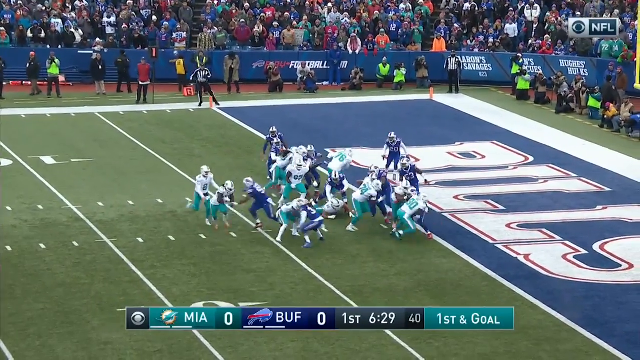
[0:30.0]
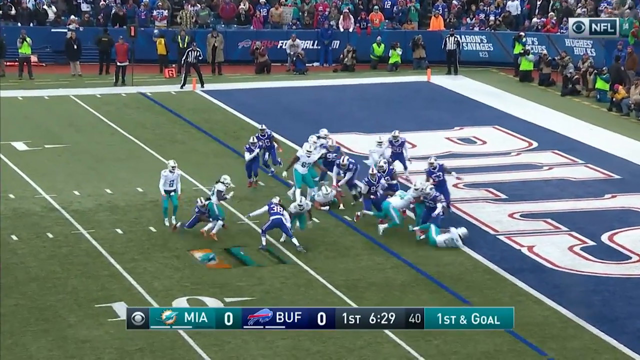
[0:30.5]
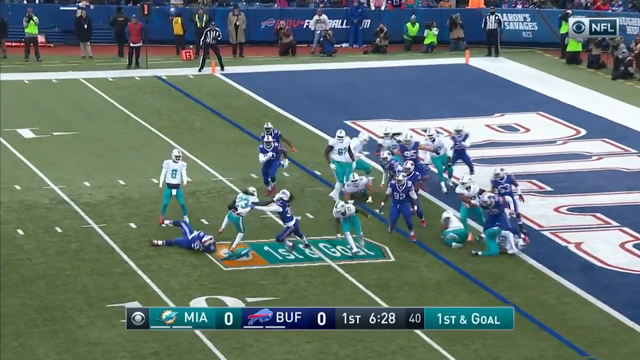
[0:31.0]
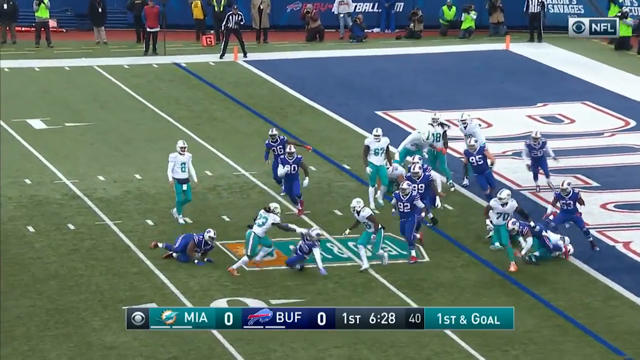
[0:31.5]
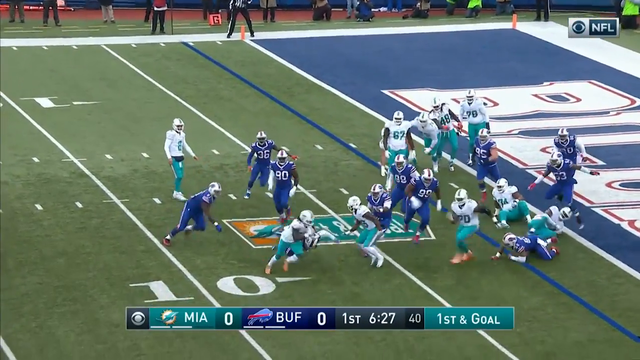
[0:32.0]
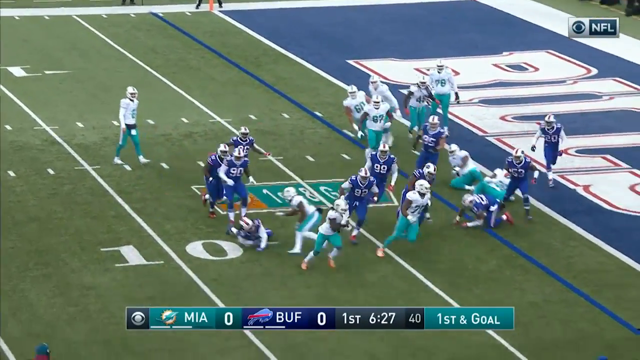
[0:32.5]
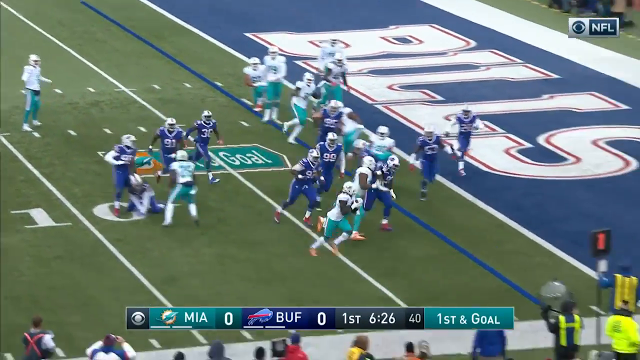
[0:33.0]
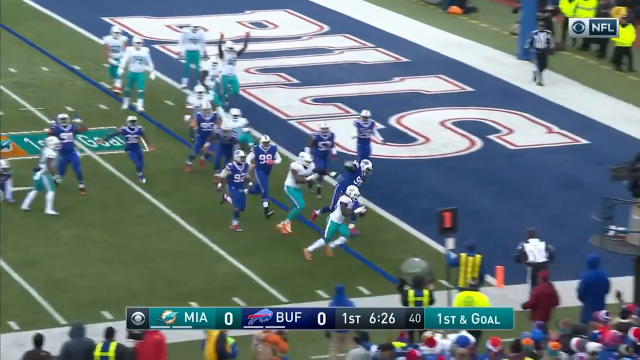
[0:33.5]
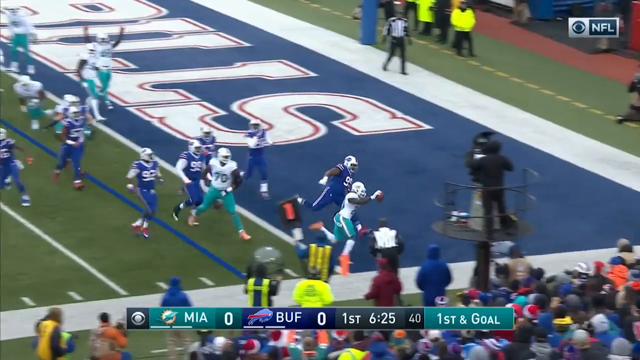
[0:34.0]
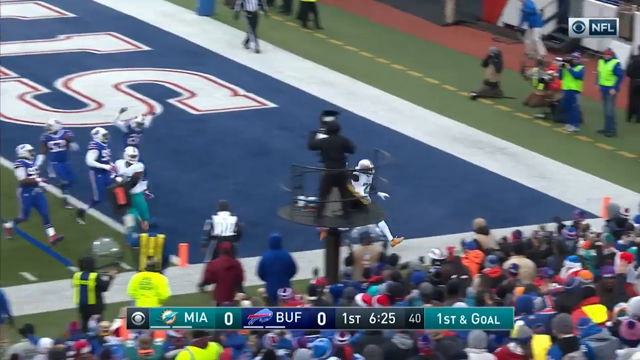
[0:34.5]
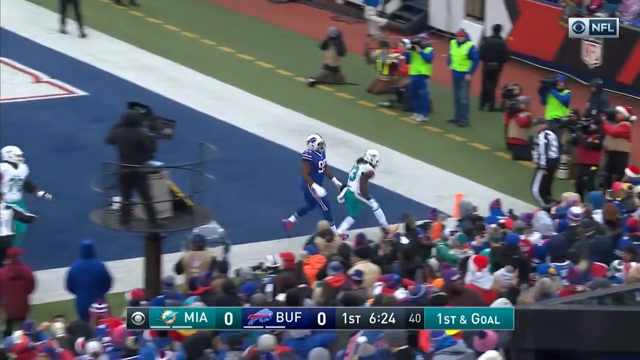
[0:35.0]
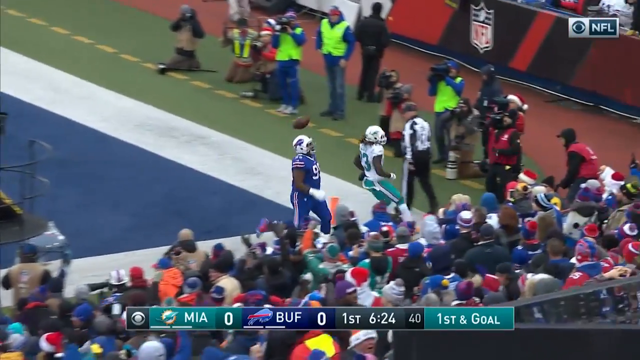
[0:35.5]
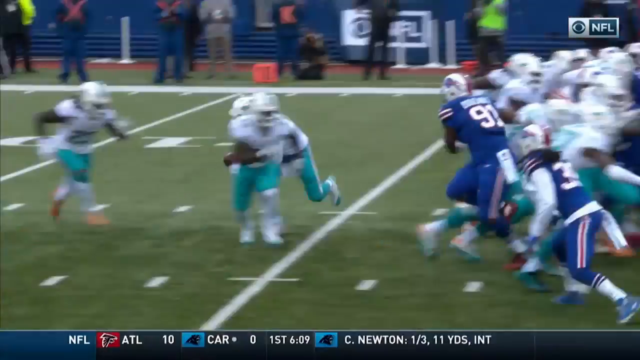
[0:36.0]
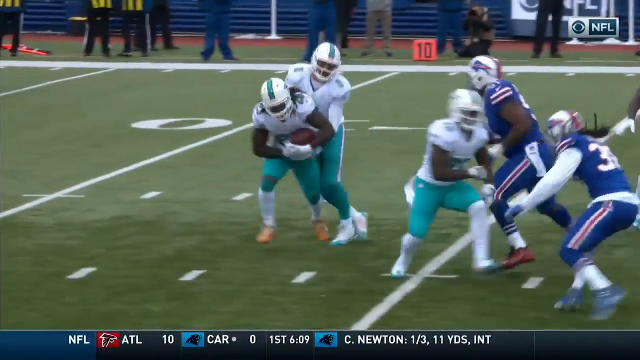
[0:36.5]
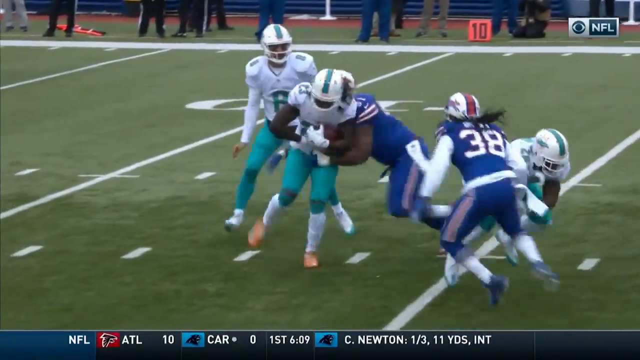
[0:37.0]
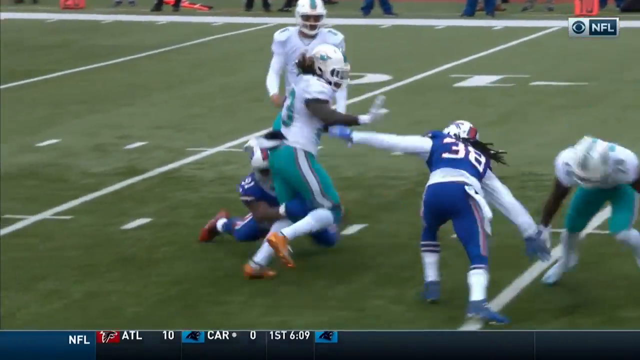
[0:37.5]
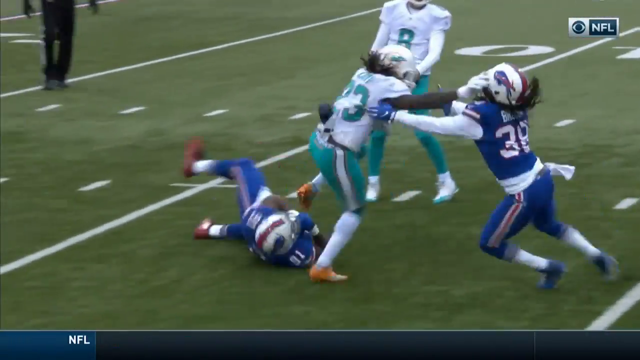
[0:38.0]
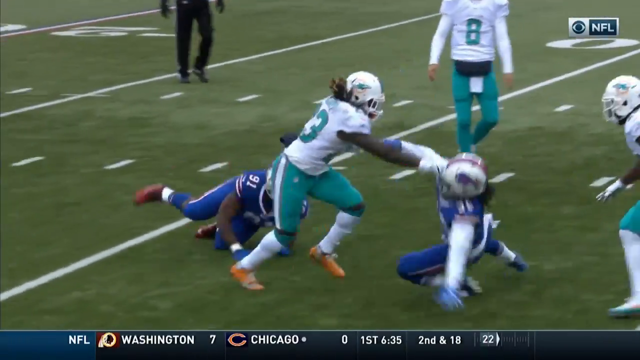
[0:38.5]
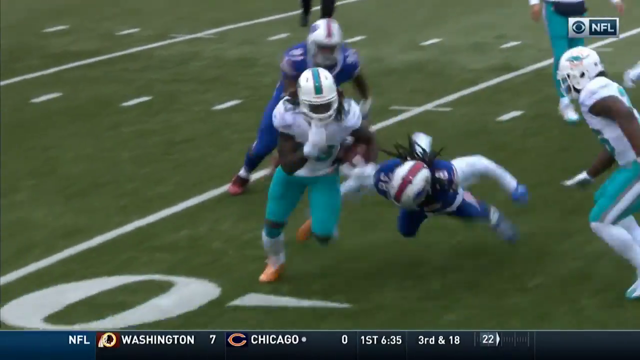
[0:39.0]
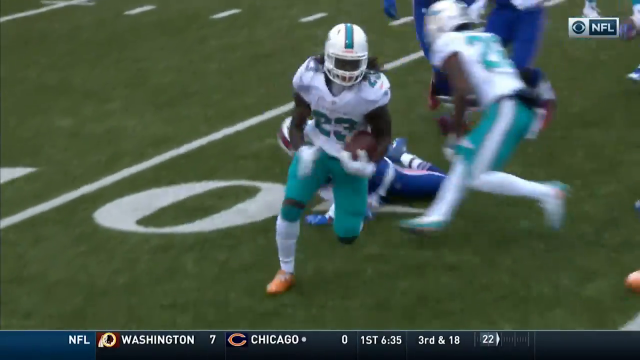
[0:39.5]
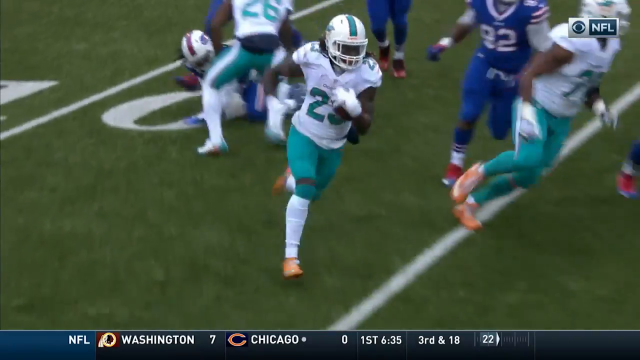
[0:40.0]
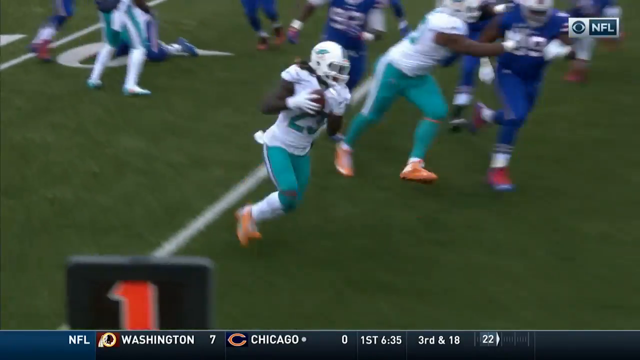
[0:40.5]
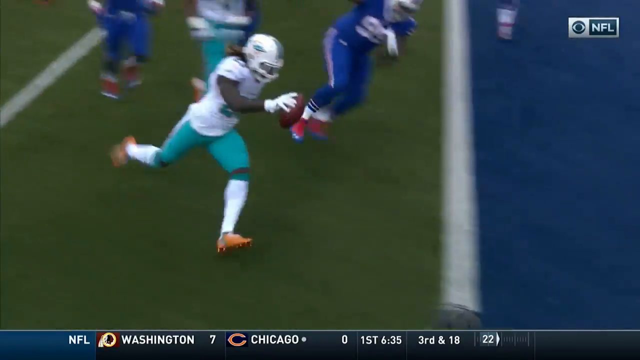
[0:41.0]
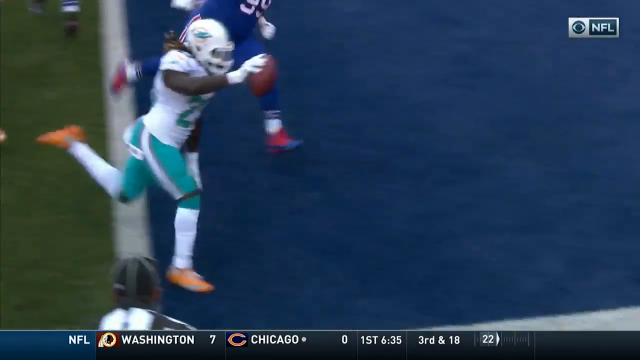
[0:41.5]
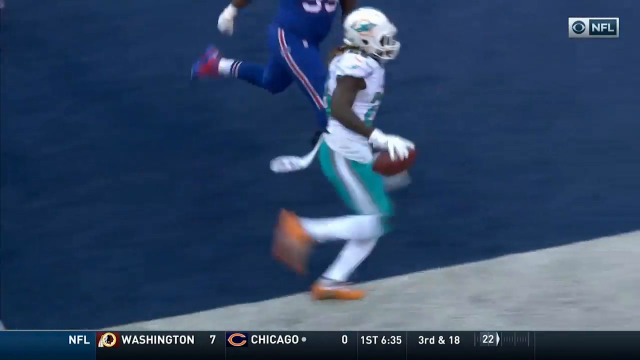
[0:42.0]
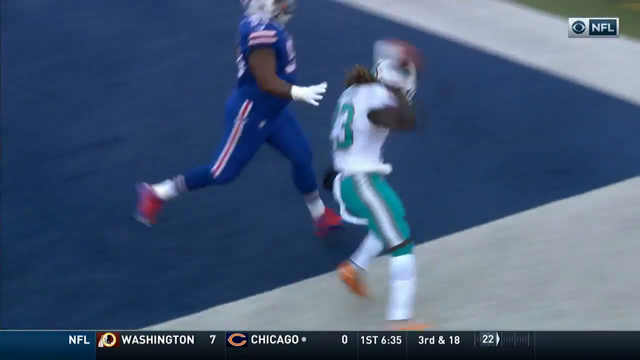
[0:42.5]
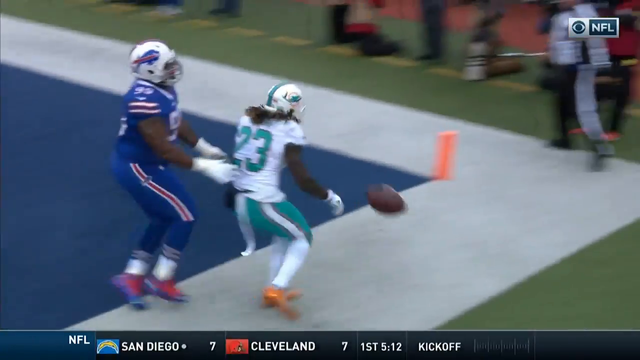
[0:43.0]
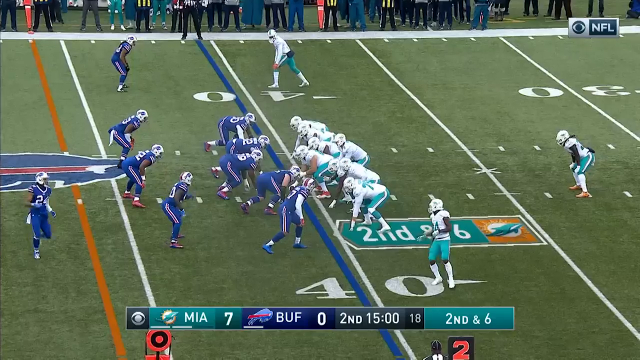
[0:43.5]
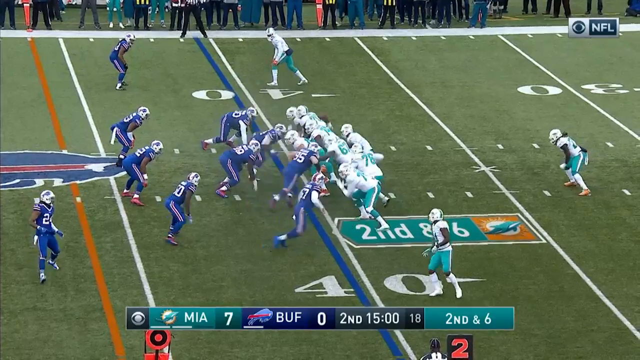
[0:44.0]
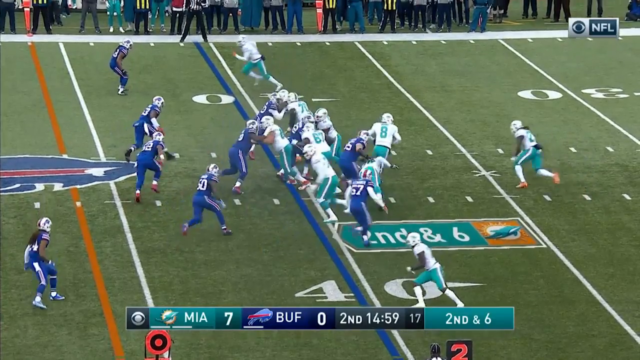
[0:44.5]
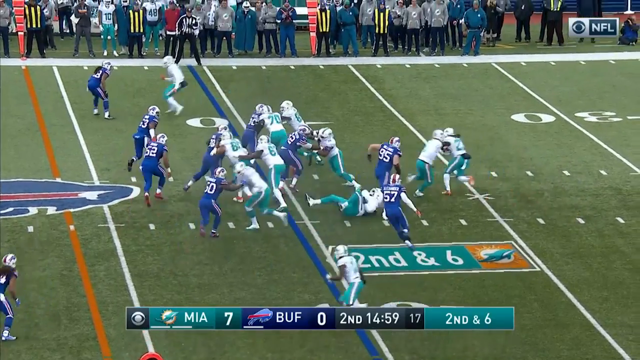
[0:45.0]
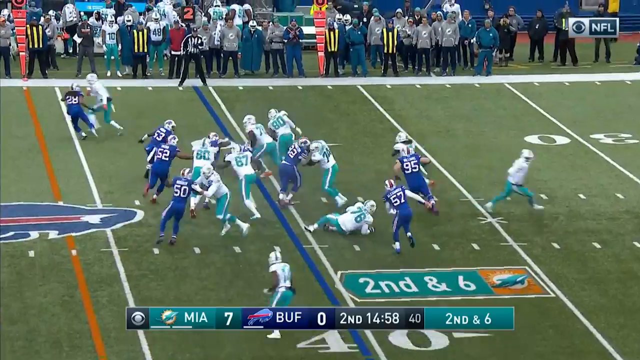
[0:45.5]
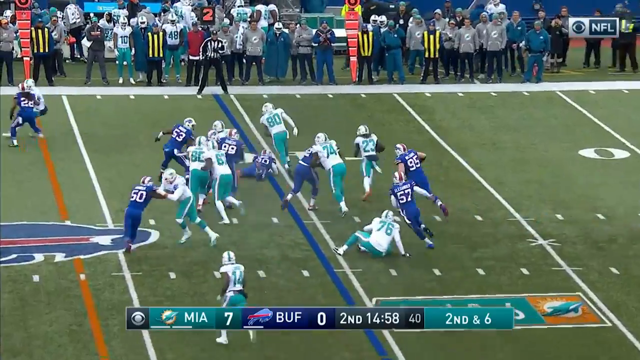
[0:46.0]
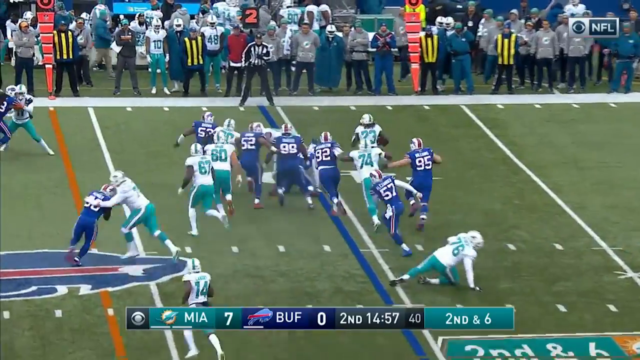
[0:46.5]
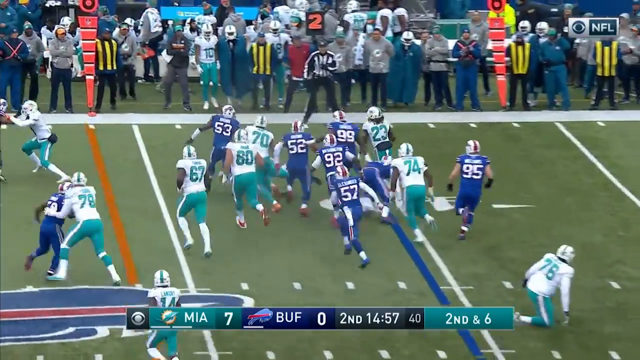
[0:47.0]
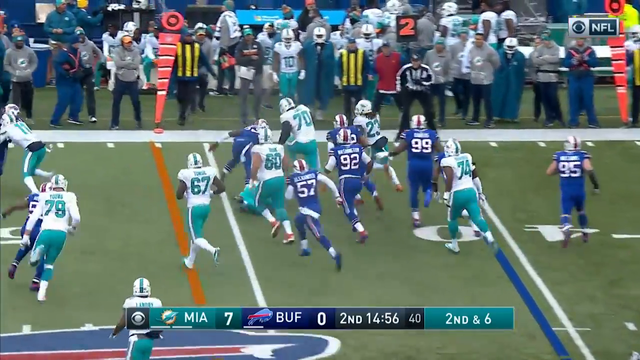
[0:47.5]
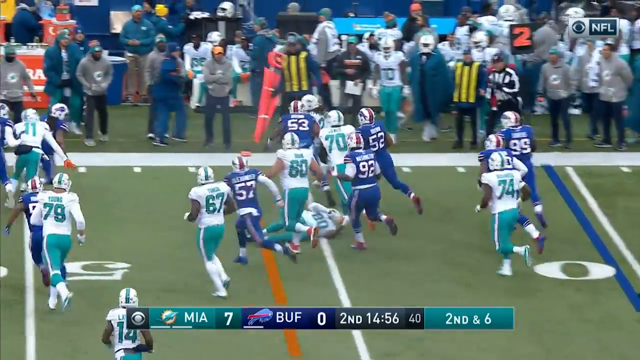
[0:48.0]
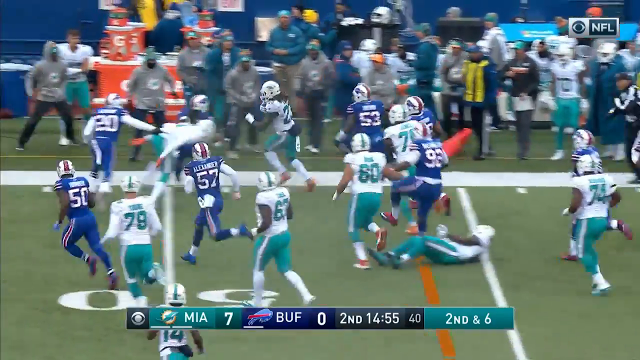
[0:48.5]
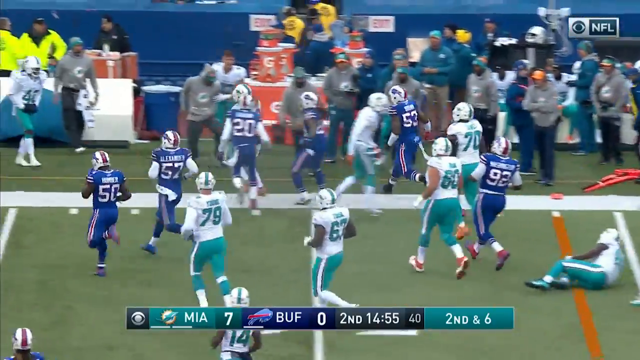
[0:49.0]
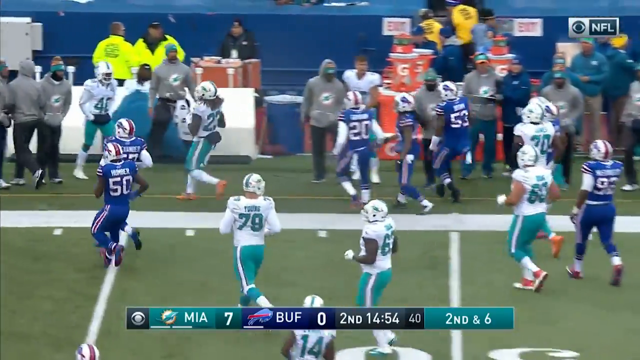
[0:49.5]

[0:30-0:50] Offensive highlights show the Miami Dolphins playing the Buffalo Bills, apparently in Buffalo, since the word "Bills" is in the end zone and the weather appears very cold. A Miami player receives the ball and runs around the defense to the right as "first and goal" appears digitally on the field. He pushes down another defender, keeps running with a defender behind him, reaches the end zone, and throws the ball down. A replay shows one defender trying to tackle him and then jumping off the ground to catch him, but failing; the player runs into the end zone holding the ball in front of him, then throws it down at the side of the end zone. In another highlight, Miami is heading to the left of the screen. The quarterback again hands the ball to this player, number 23, who runs around to the right, gets past a few defenders, and runs out of bounds.